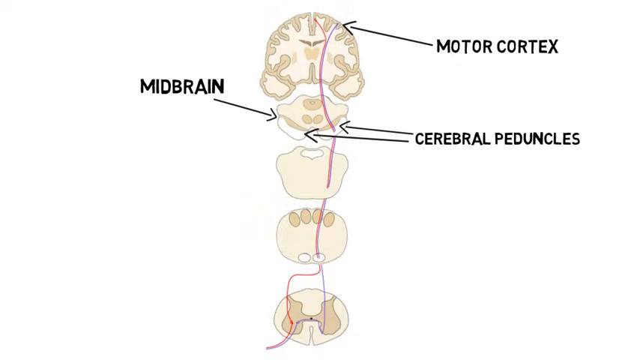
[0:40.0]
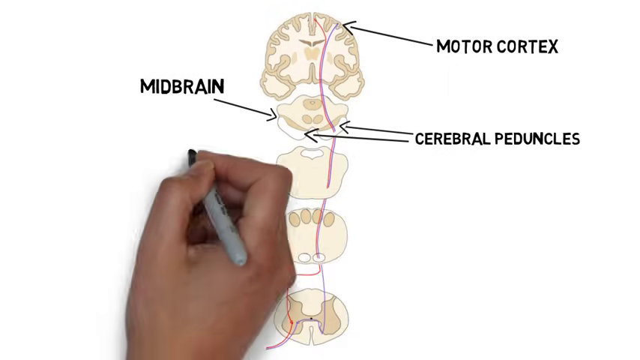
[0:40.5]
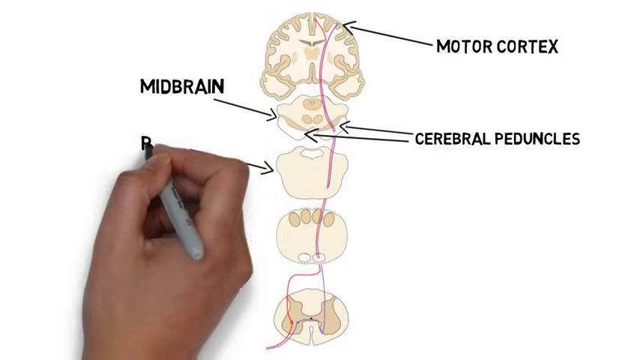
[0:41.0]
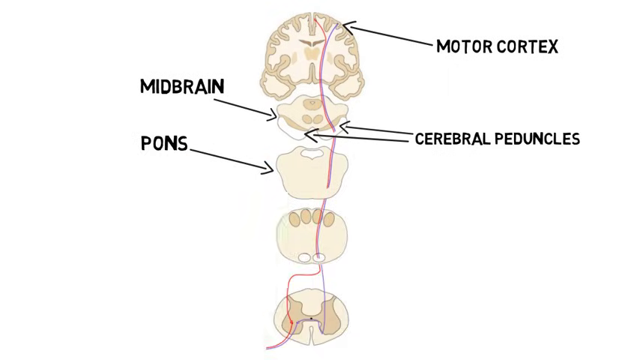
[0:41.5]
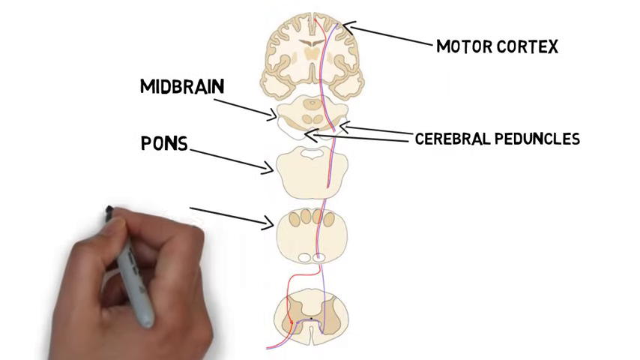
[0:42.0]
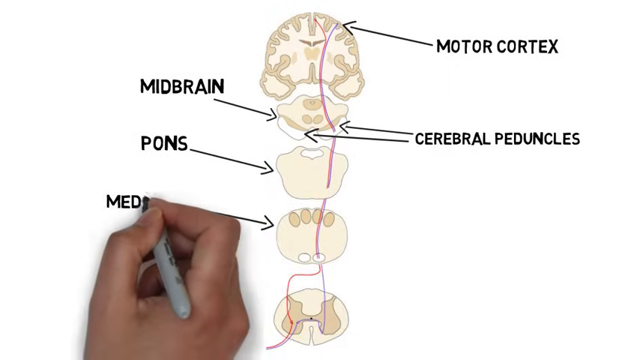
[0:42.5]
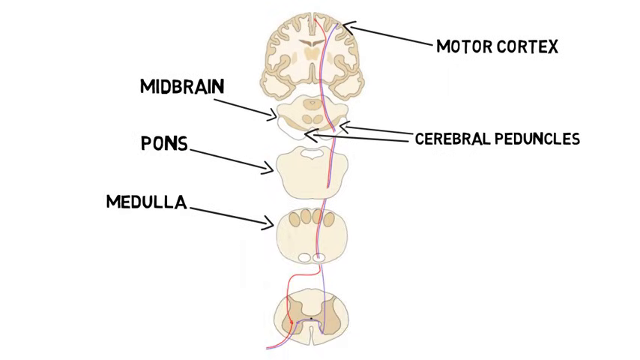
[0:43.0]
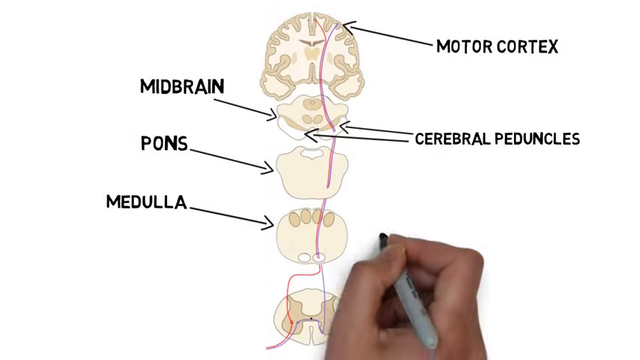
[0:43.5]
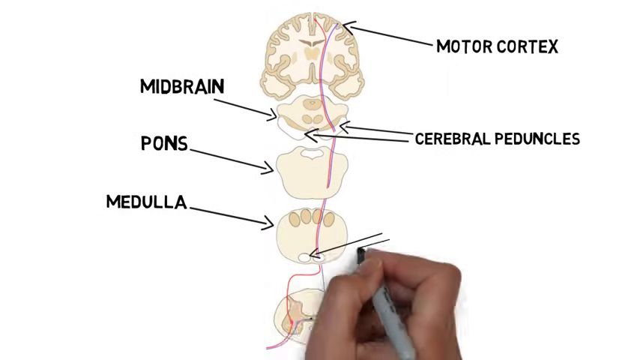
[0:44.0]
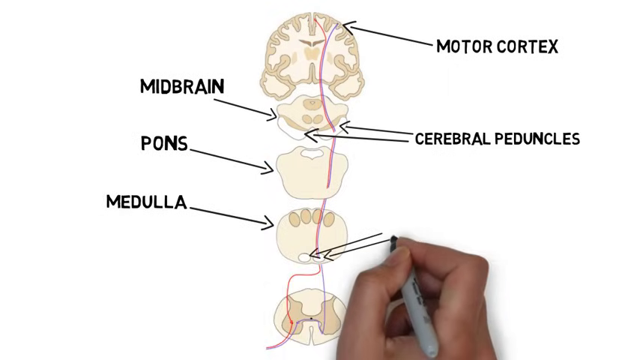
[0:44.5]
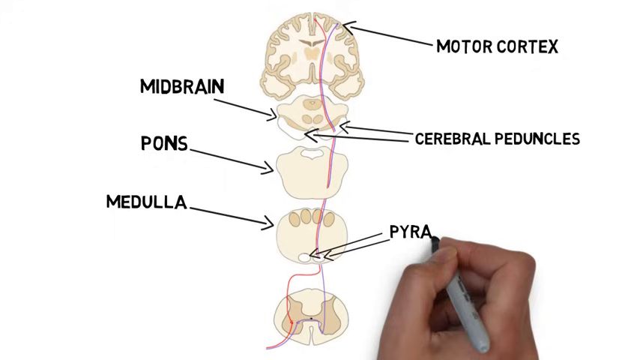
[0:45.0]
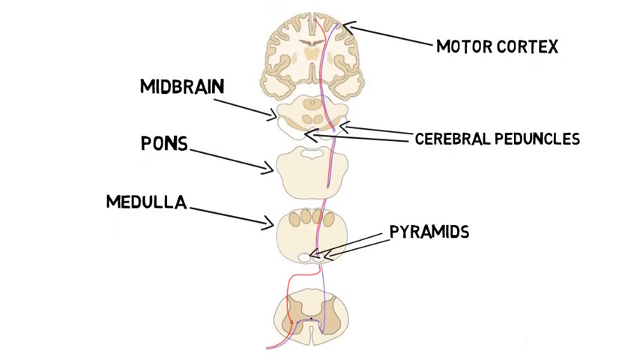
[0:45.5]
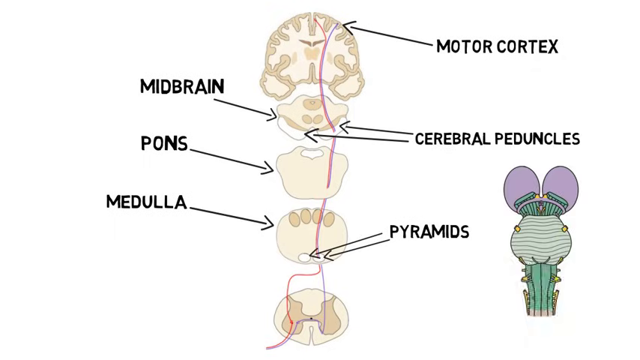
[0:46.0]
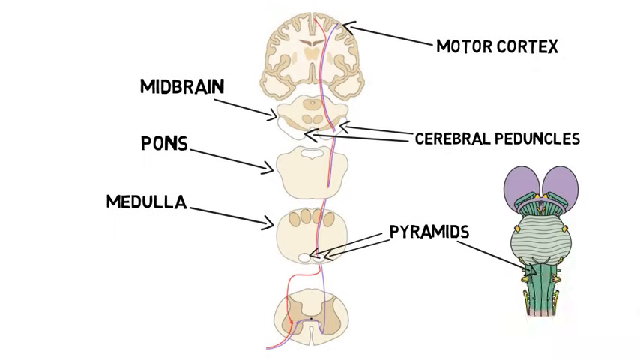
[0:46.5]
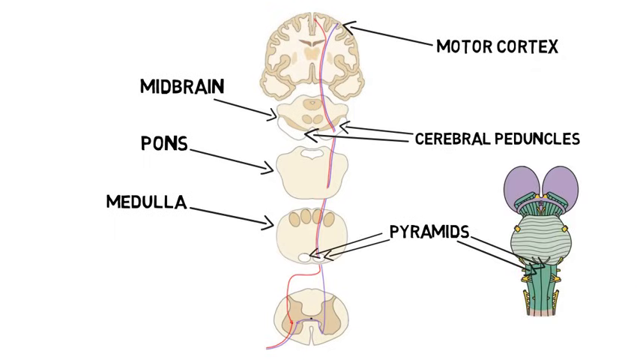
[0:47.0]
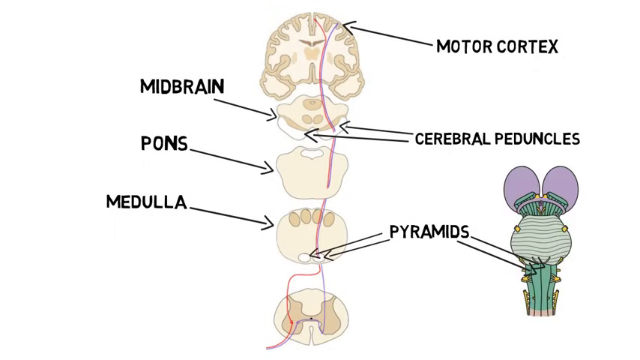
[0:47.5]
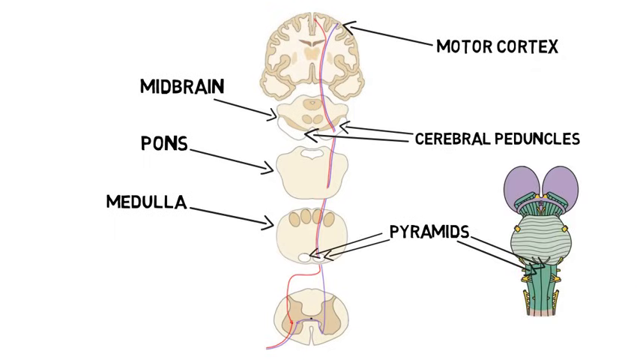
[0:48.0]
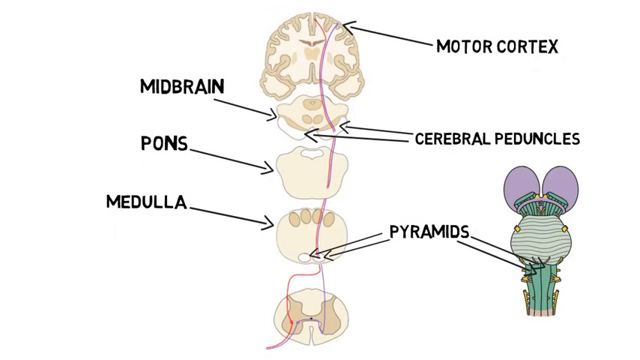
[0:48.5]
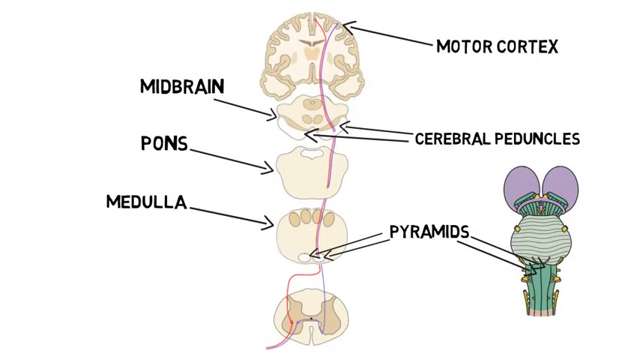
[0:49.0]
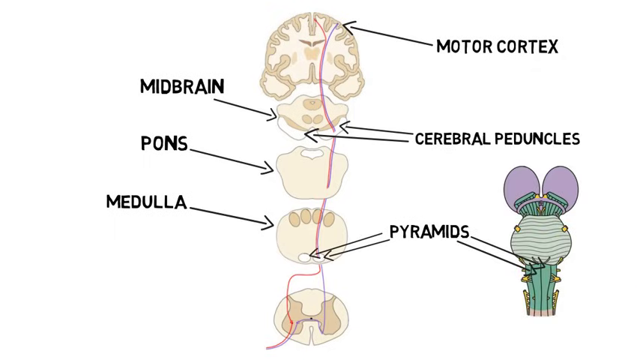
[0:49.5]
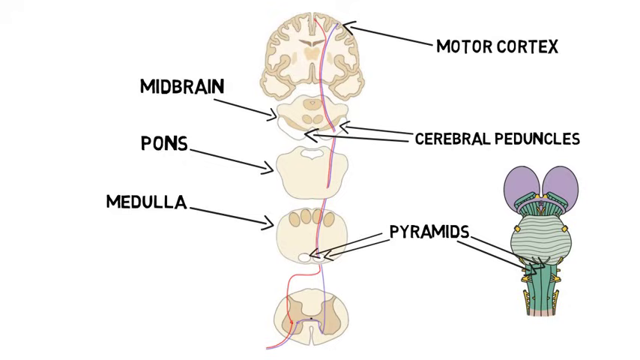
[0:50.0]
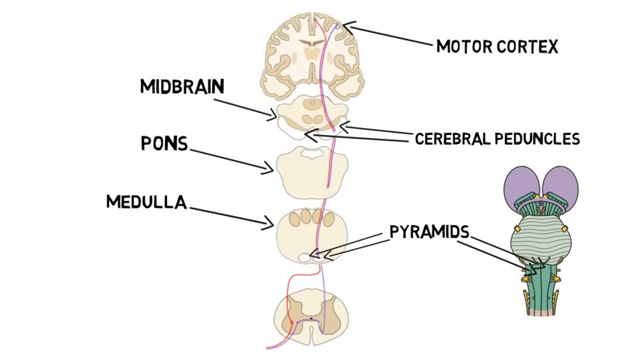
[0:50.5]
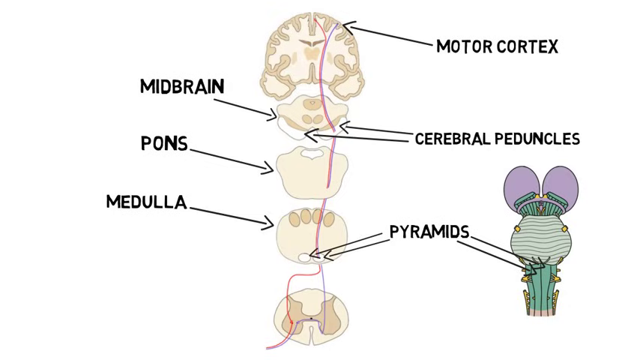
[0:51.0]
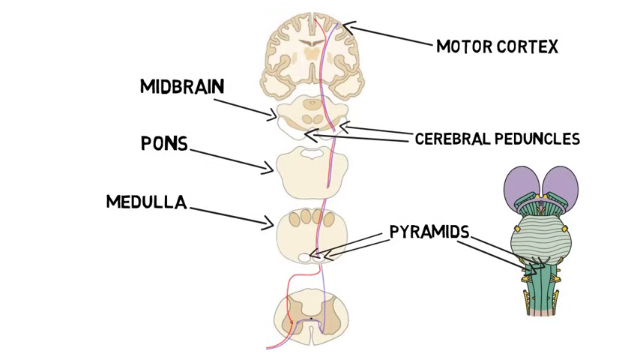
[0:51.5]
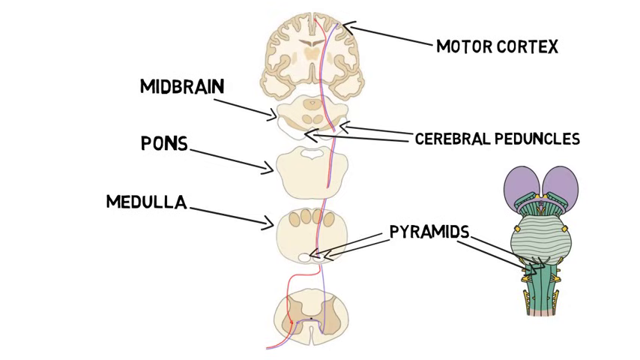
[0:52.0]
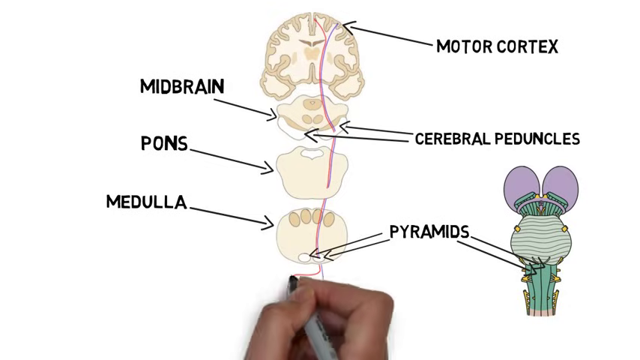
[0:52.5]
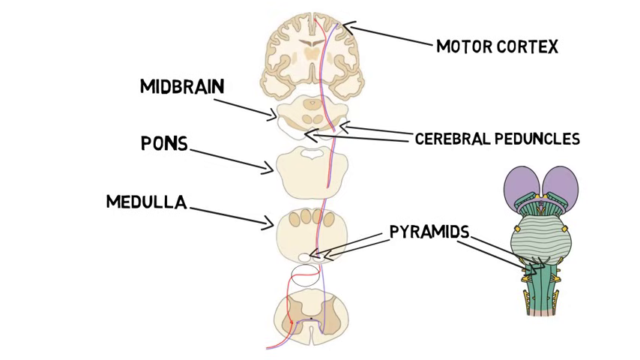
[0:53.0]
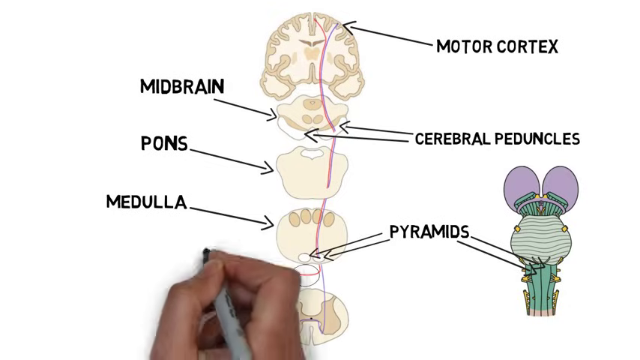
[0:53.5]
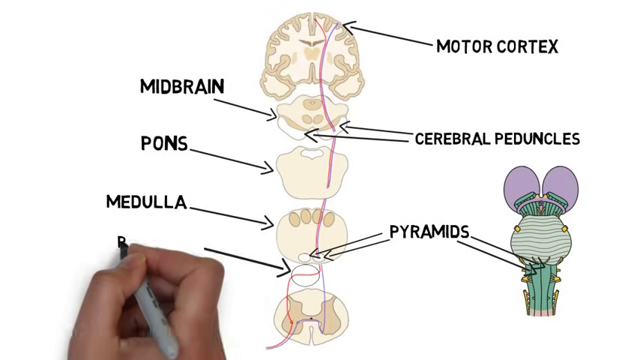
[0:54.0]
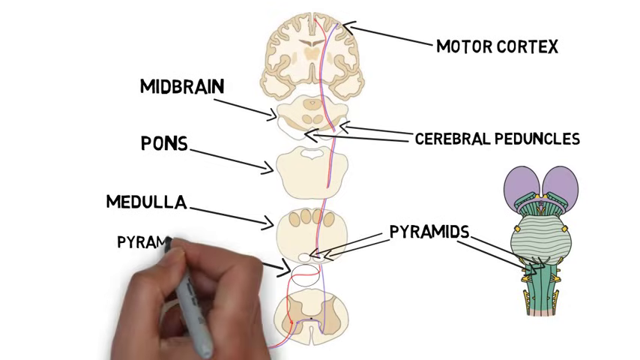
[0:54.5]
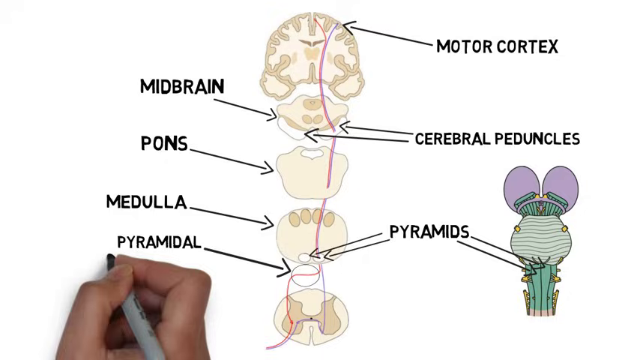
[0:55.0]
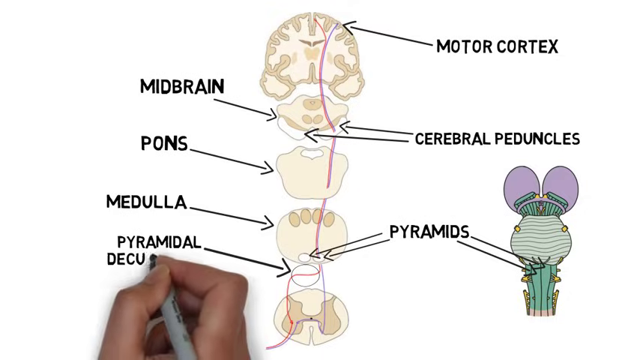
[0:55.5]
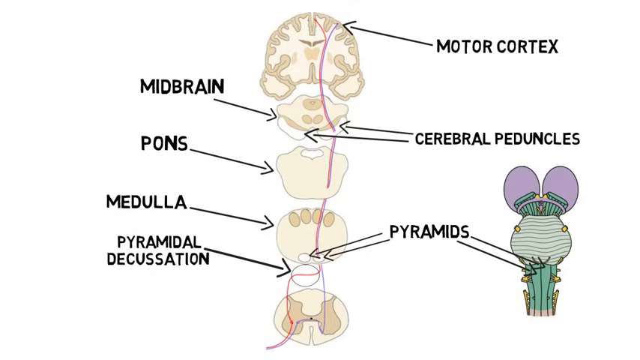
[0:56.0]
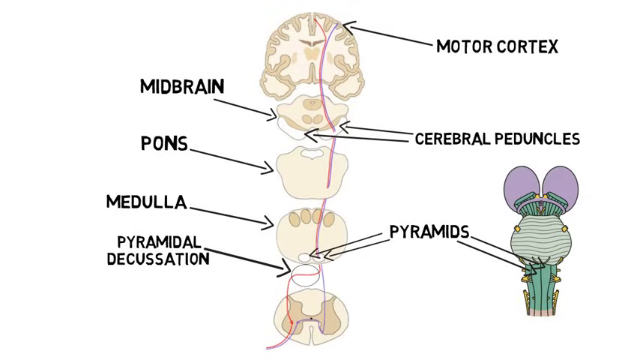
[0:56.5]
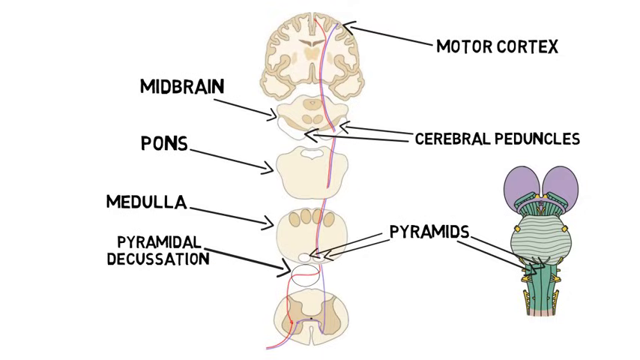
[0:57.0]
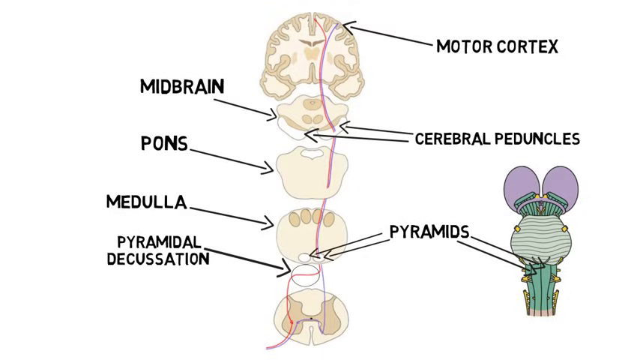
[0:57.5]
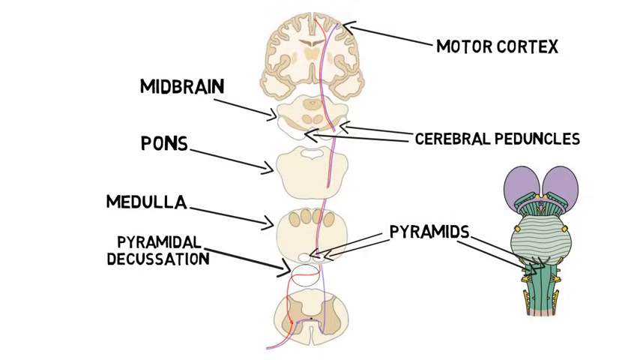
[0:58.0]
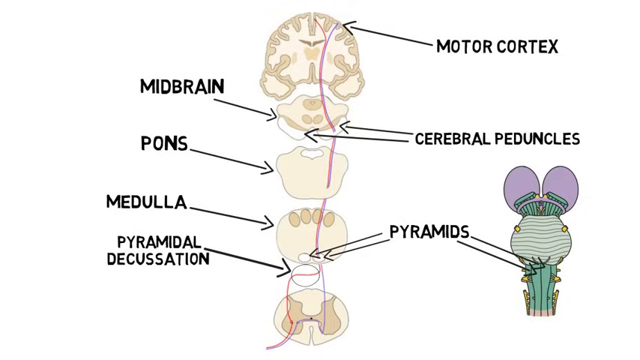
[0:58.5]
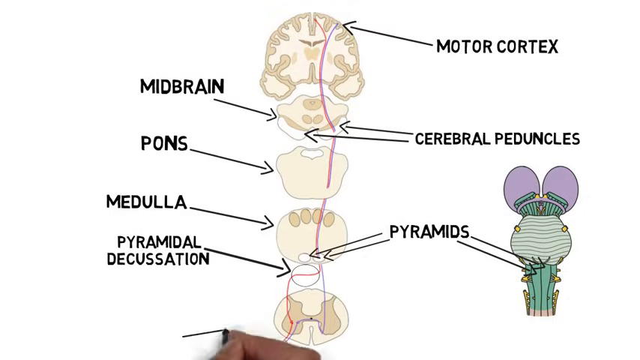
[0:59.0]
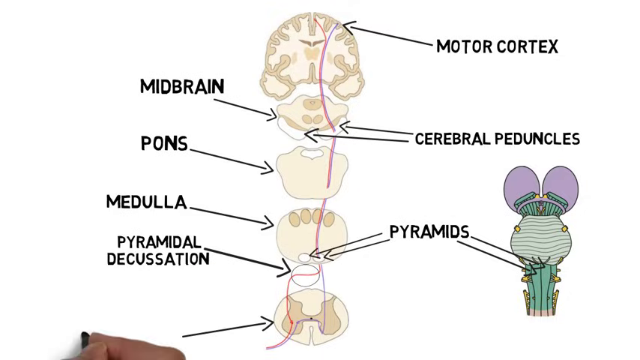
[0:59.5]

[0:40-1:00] The hand comes back onto the screen and draws another arrow on the left side of the diagram, writing the word "pons" on it. Beneath that, it draws another arrow and writes "medulla" at its end. On the right of the diagram it draws two more arrows and writes "pyramids" at their end. More arrows are drawn from the word "pyramids" pointing to the right, where there is an empty white square, and the hand places another diagram in that spot: a green and purple image showing where the pyramids are. The hand then returns to the bottom left of the screen, draws another arrow, and writes "pyramidal decussation". It draws another arrow at the bottom and starts writing another word.